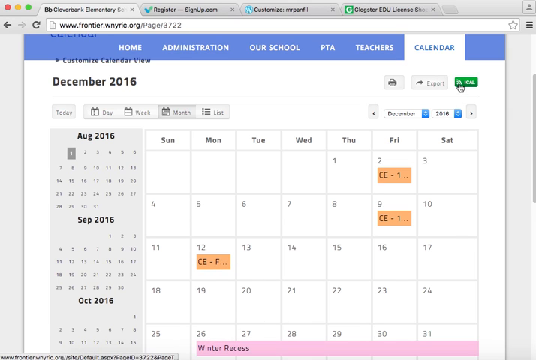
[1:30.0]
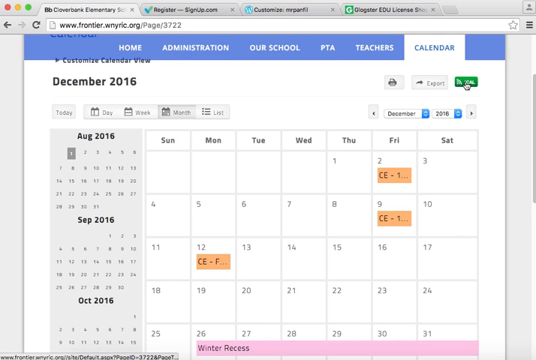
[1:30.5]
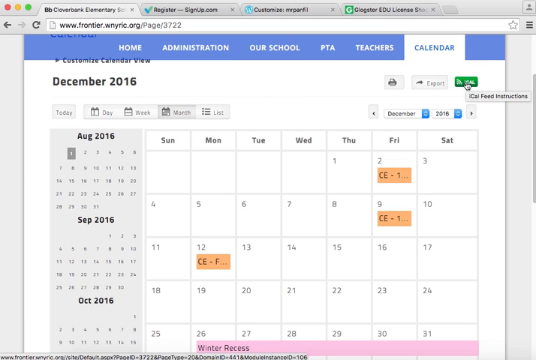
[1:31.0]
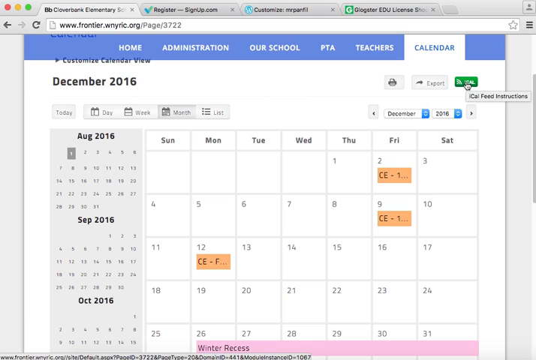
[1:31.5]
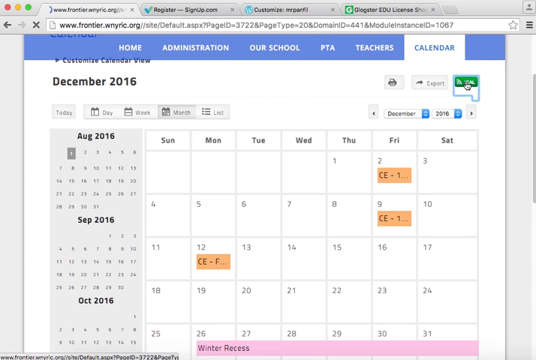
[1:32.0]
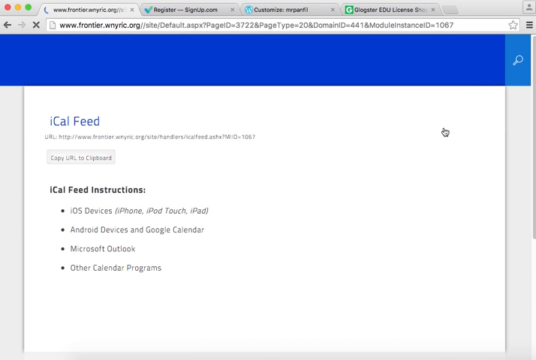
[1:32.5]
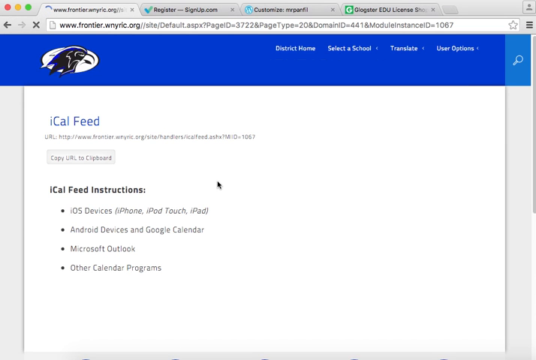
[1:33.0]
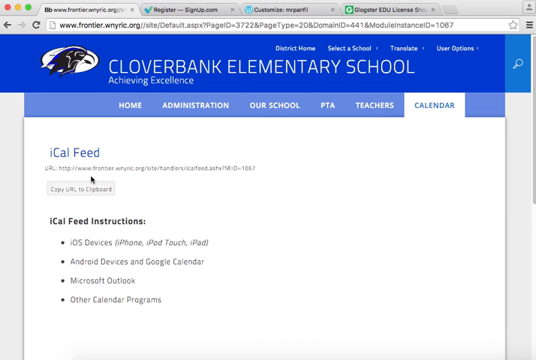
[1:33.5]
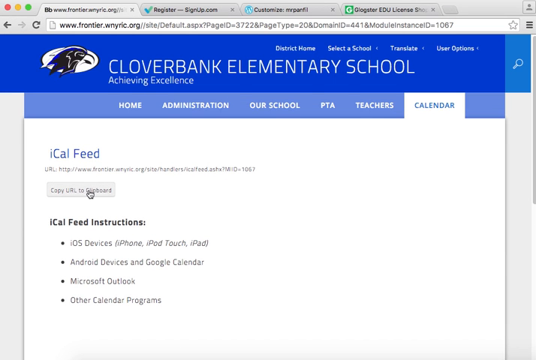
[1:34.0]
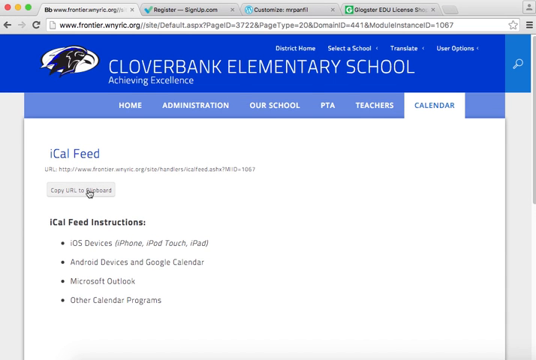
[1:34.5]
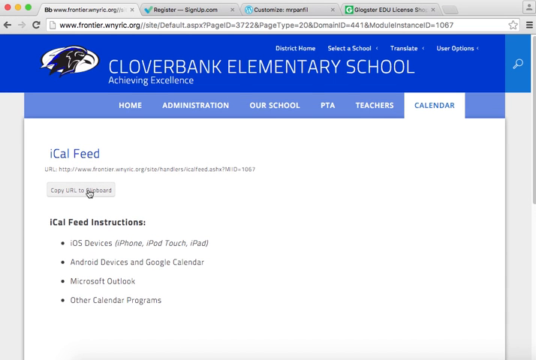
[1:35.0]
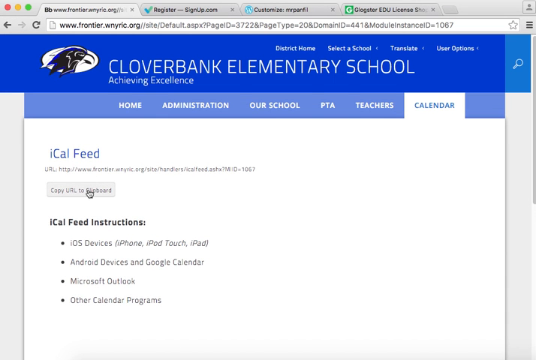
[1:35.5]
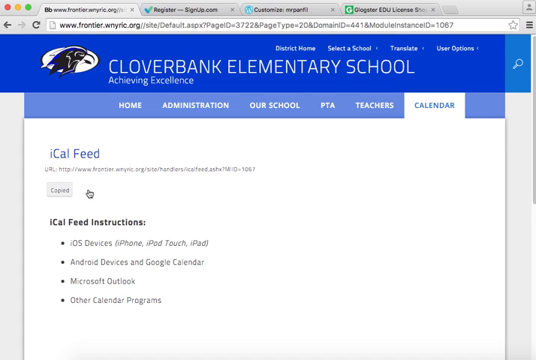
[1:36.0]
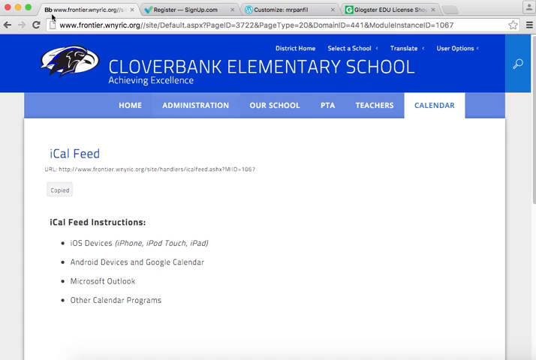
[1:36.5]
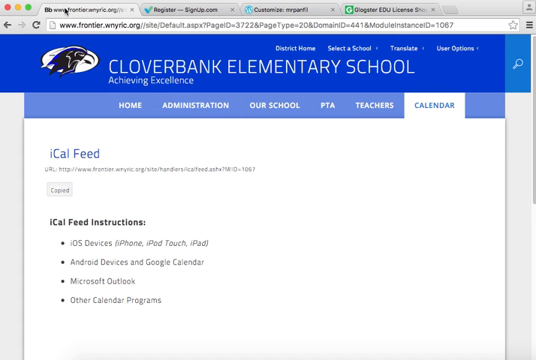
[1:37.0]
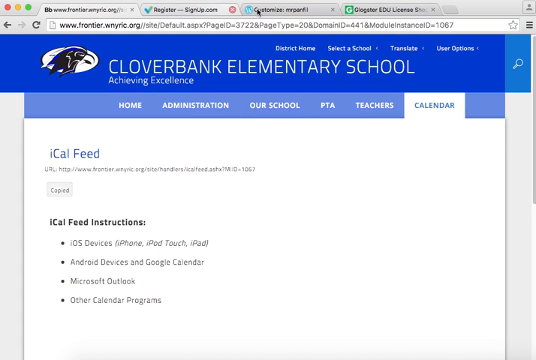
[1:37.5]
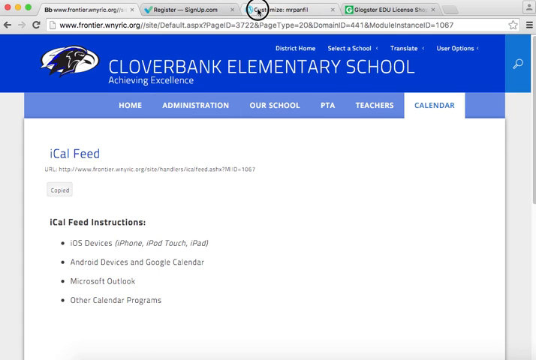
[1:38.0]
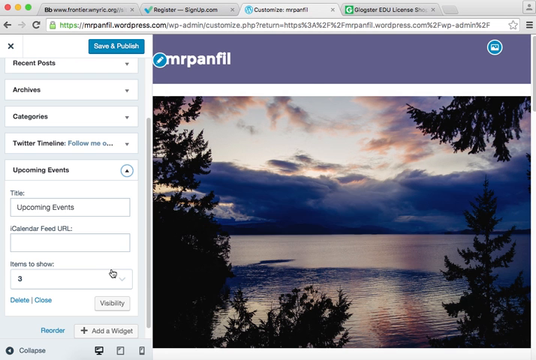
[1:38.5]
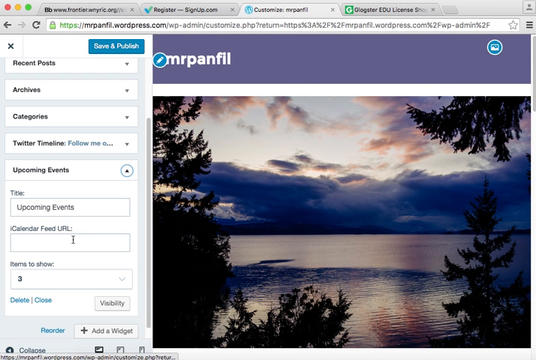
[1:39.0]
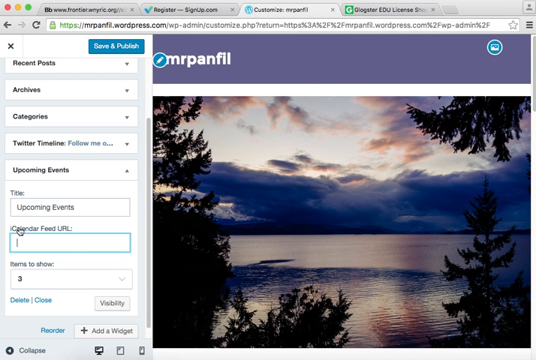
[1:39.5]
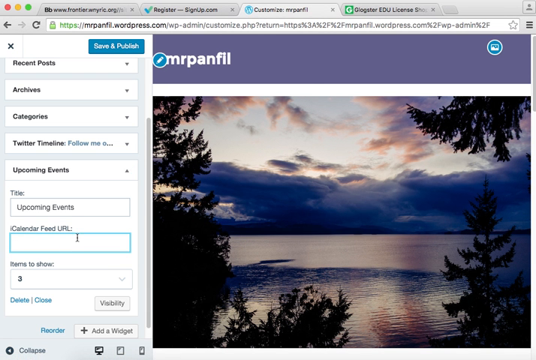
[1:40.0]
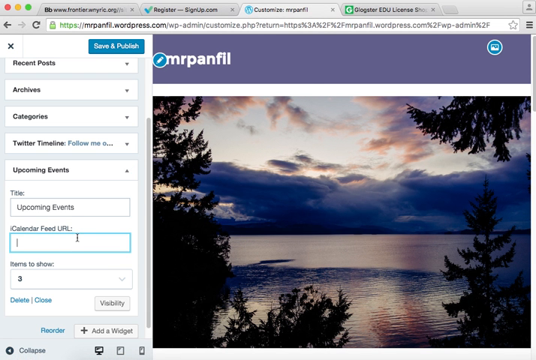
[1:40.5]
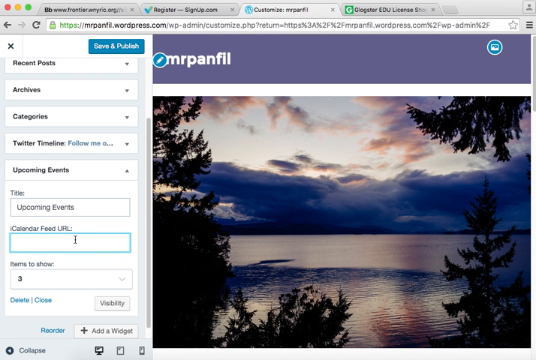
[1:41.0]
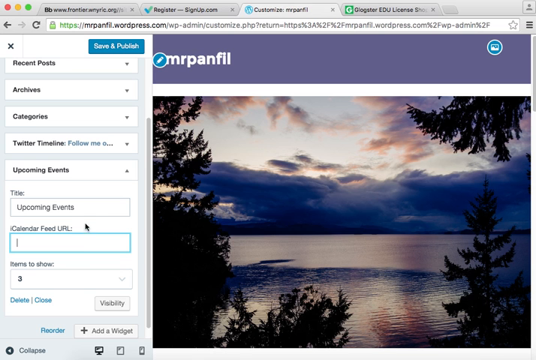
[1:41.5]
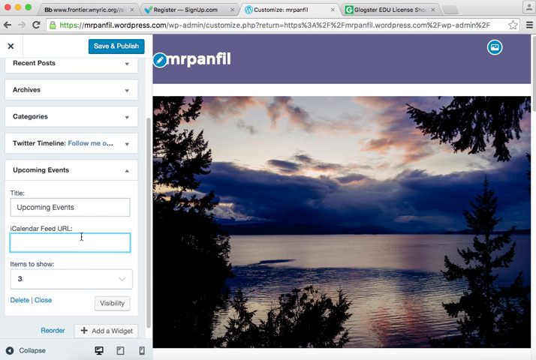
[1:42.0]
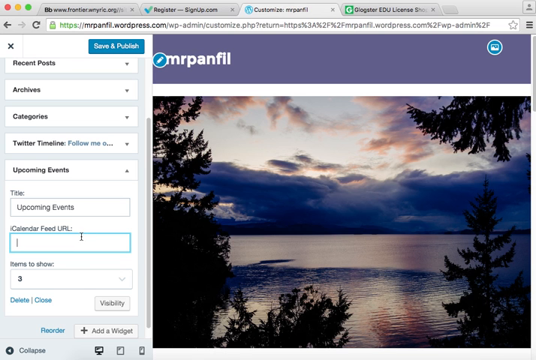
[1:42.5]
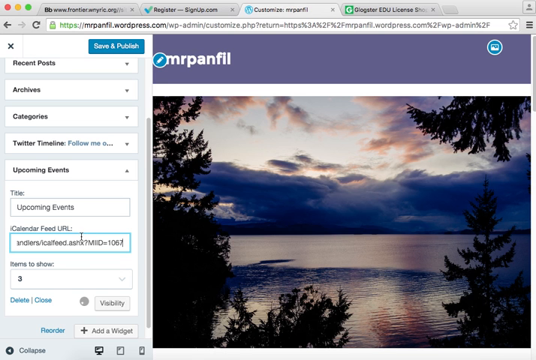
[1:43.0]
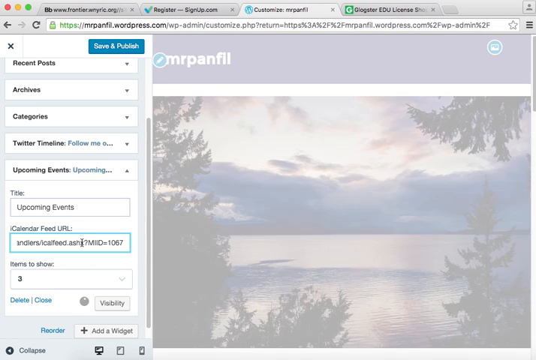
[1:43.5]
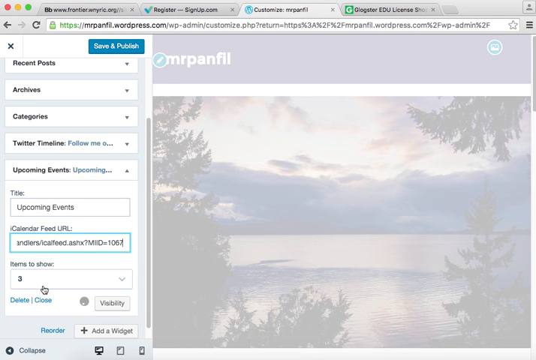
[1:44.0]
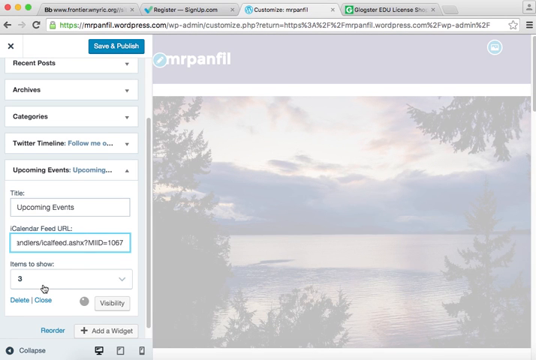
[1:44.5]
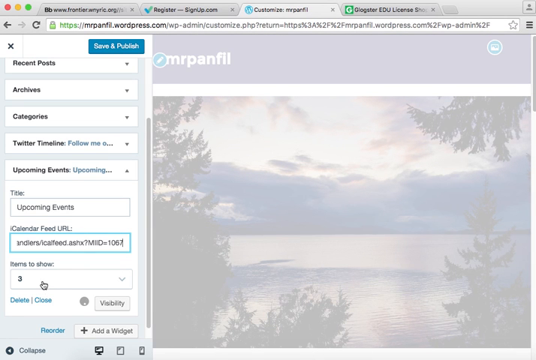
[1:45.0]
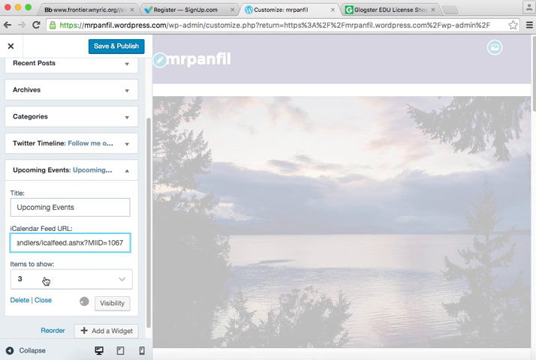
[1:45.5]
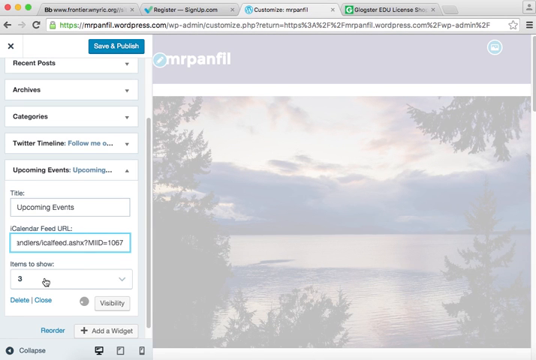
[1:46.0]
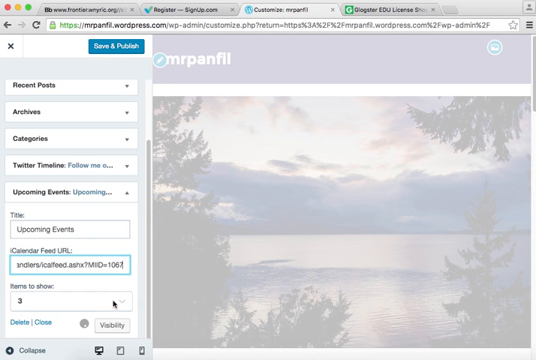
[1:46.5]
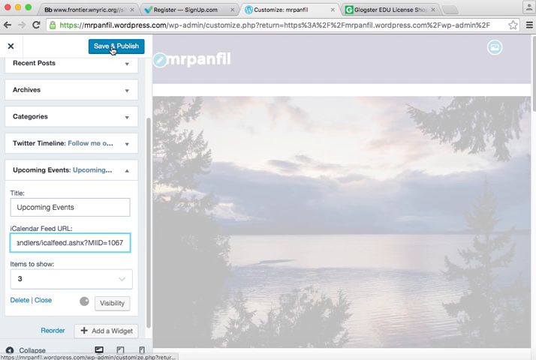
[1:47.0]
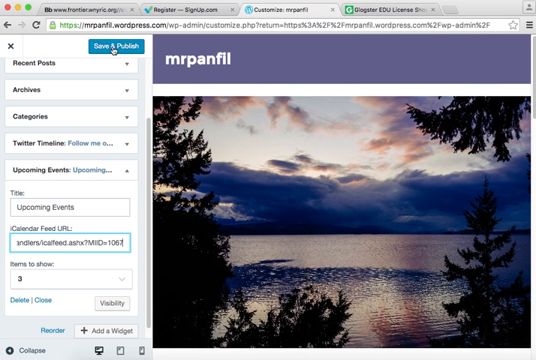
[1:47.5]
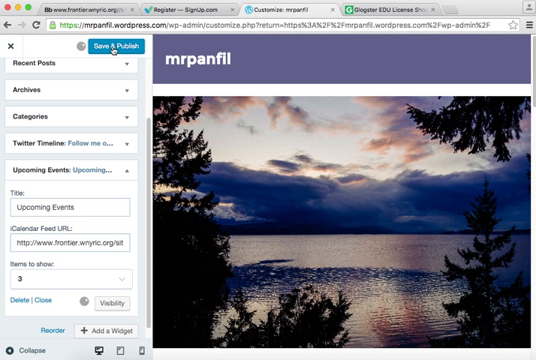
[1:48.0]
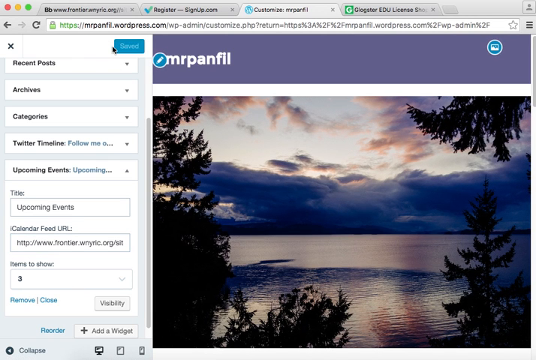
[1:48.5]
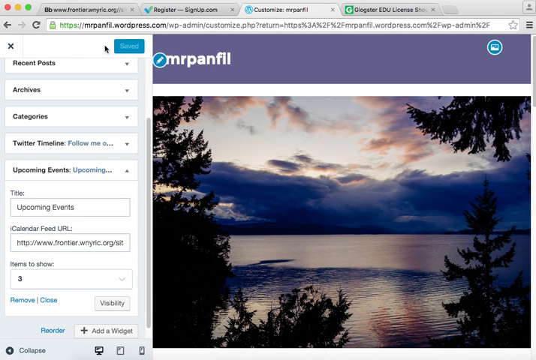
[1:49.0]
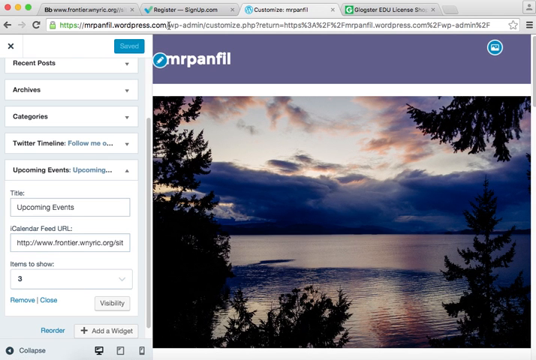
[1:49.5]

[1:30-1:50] The user clicks a green iCal button, which loads a new webpage with a button that says "copy URL to clipboard." They click it, apparently copying the link for the iCal feed, and go back to the WordPress admin page for the Upcoming Events widget. Near the bottom of that page is a section called "iCalendarFeedURL." The user clicks on it and then pastes what was copied, apparently by right-clicking with the mouse or pressing Control-V. He then goes to the items shown setting, sets it to three, and appears to be about to click Save.